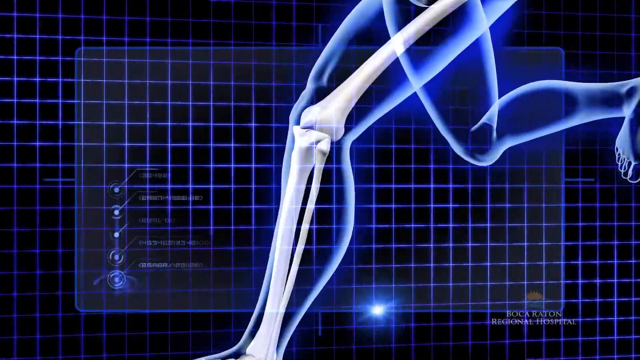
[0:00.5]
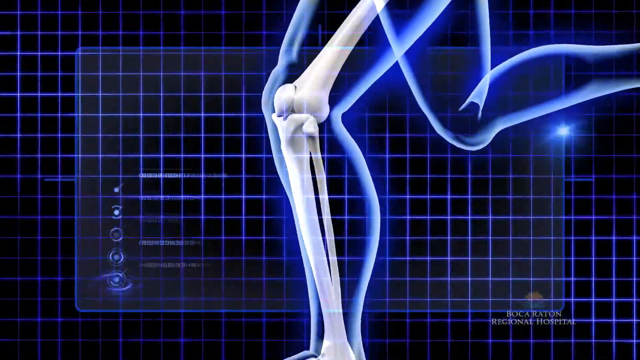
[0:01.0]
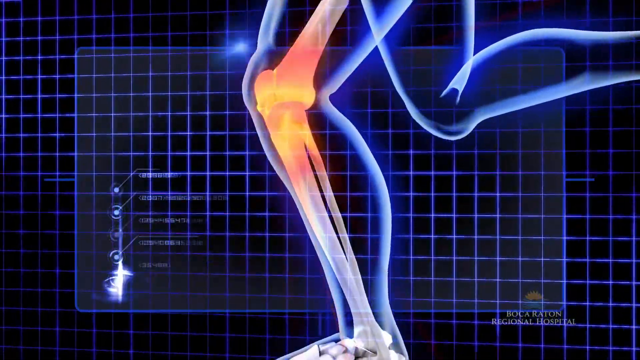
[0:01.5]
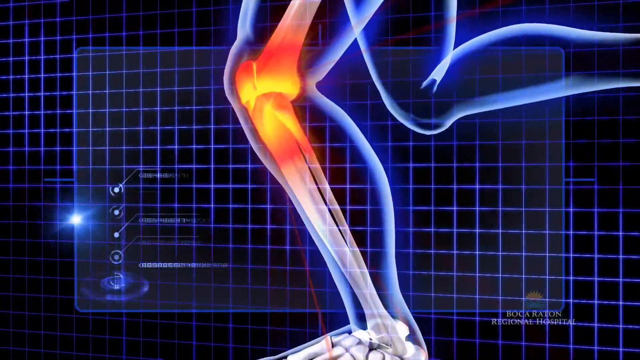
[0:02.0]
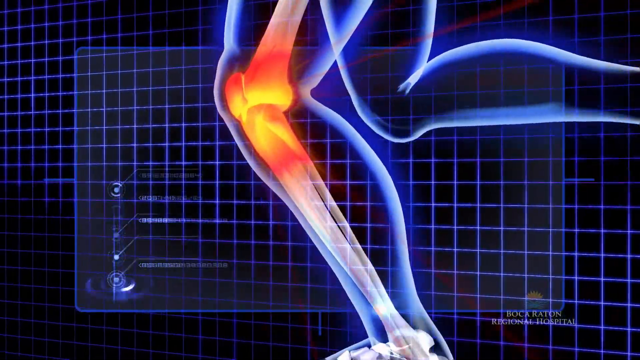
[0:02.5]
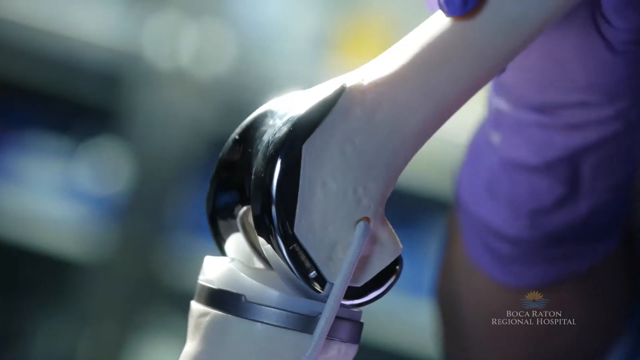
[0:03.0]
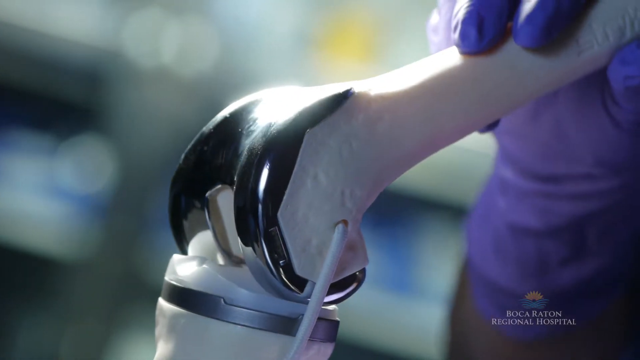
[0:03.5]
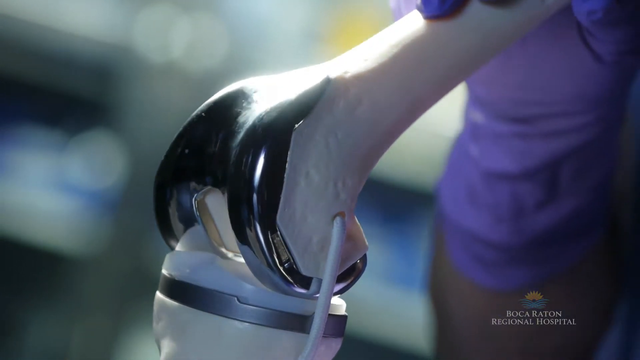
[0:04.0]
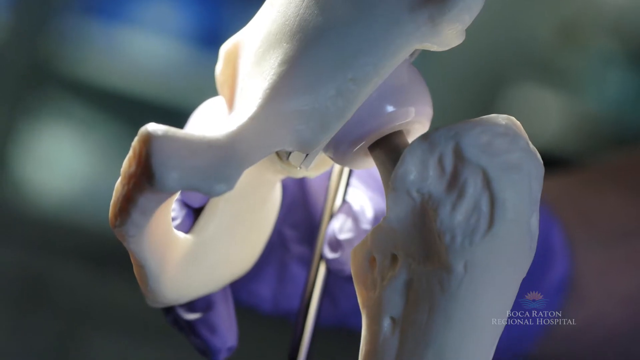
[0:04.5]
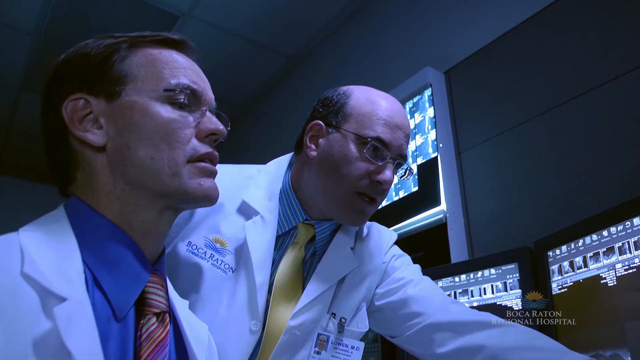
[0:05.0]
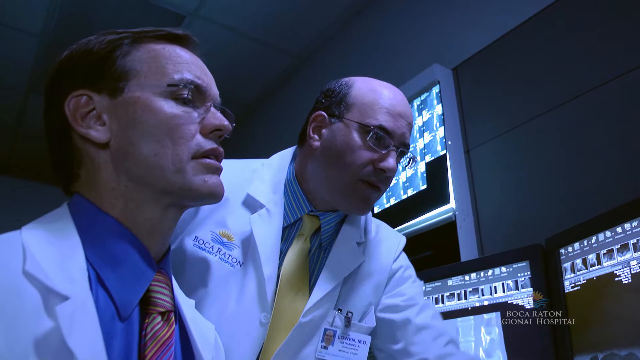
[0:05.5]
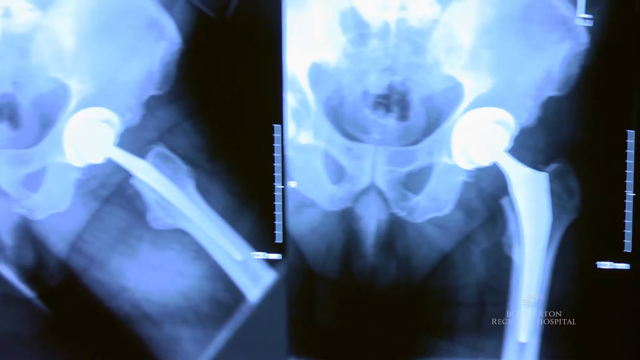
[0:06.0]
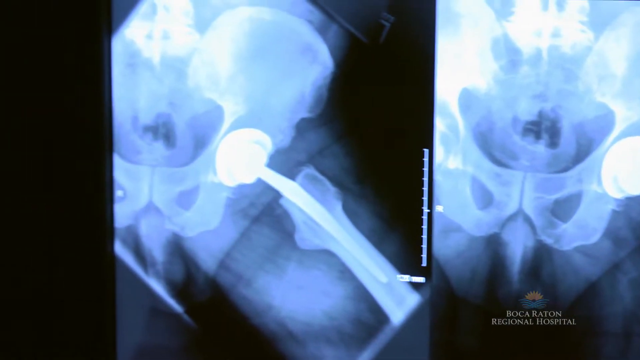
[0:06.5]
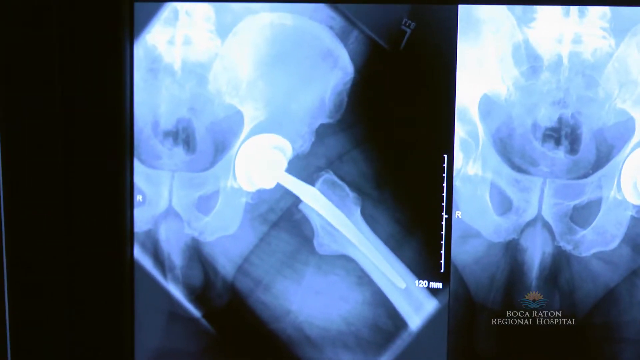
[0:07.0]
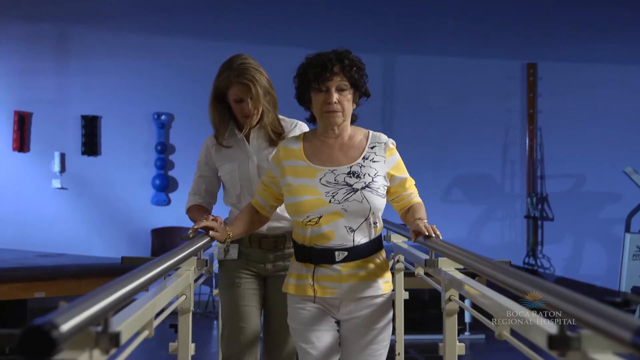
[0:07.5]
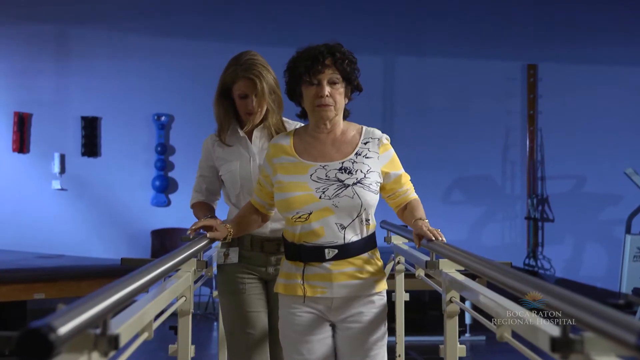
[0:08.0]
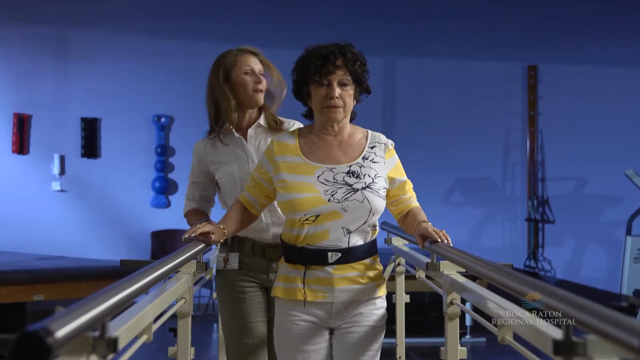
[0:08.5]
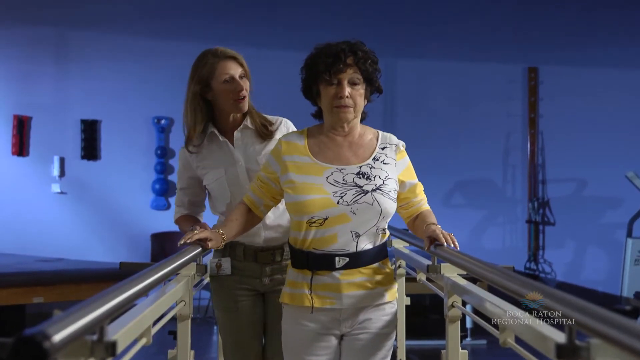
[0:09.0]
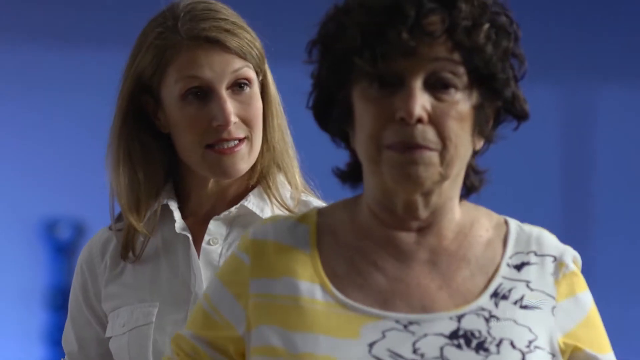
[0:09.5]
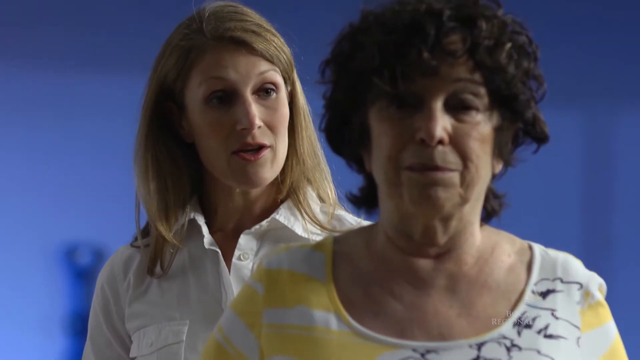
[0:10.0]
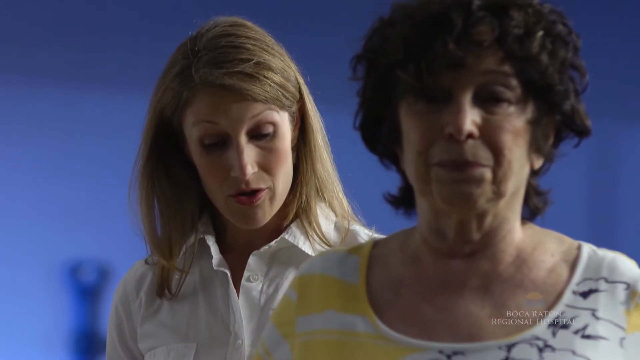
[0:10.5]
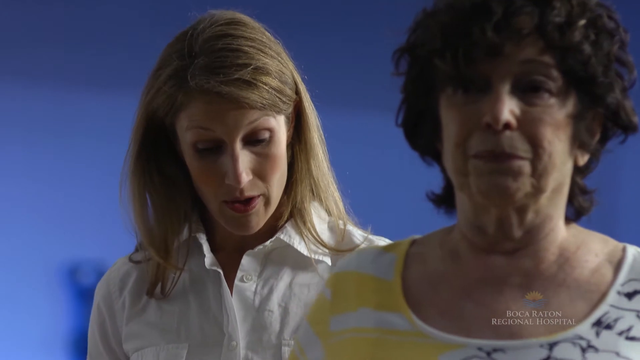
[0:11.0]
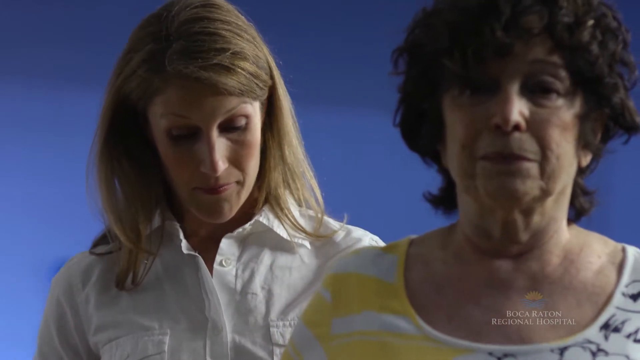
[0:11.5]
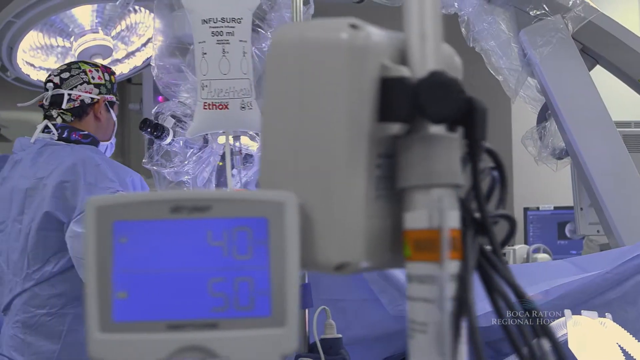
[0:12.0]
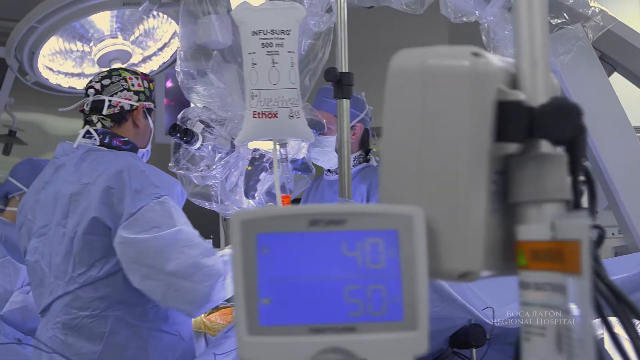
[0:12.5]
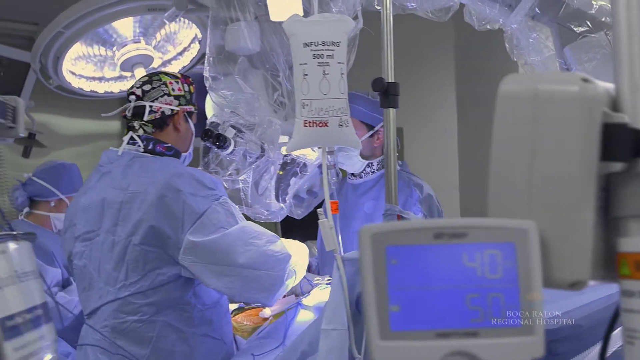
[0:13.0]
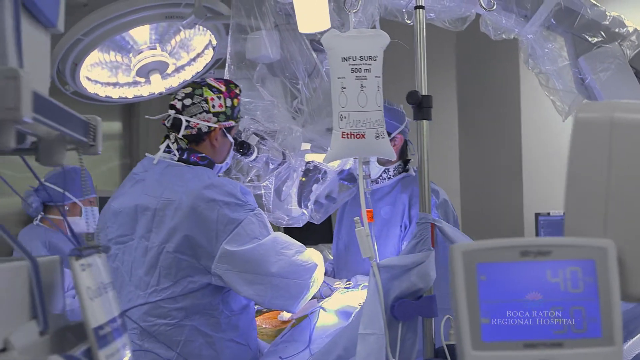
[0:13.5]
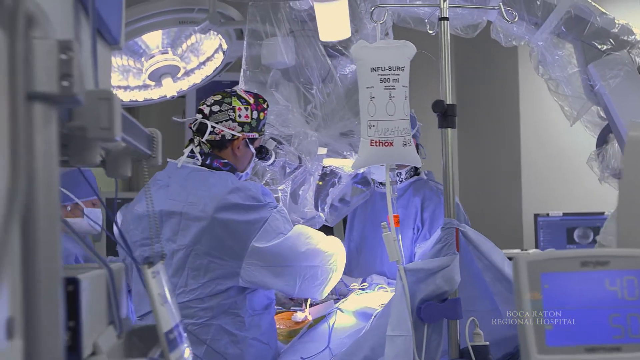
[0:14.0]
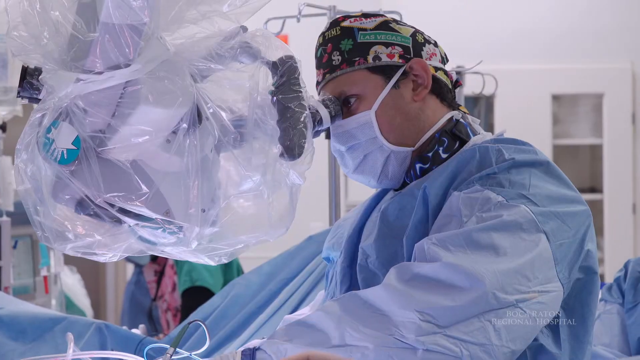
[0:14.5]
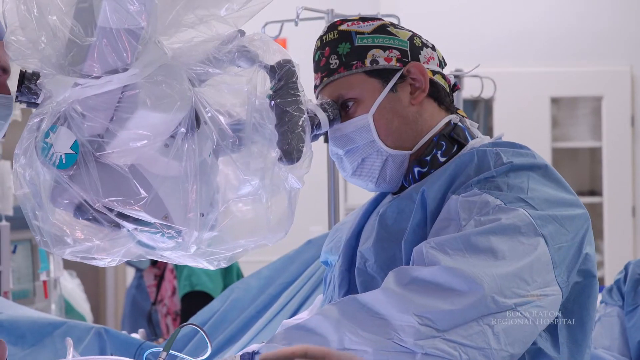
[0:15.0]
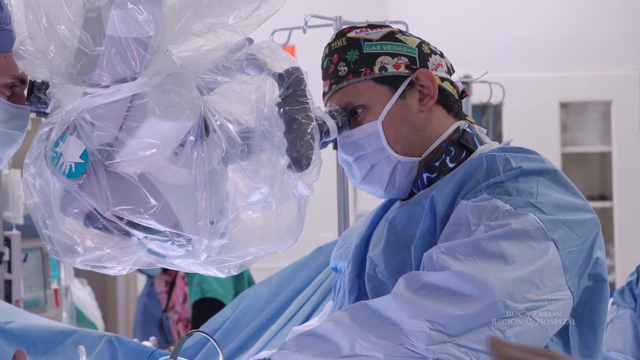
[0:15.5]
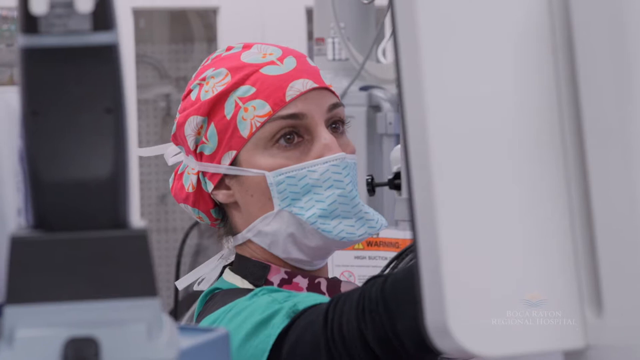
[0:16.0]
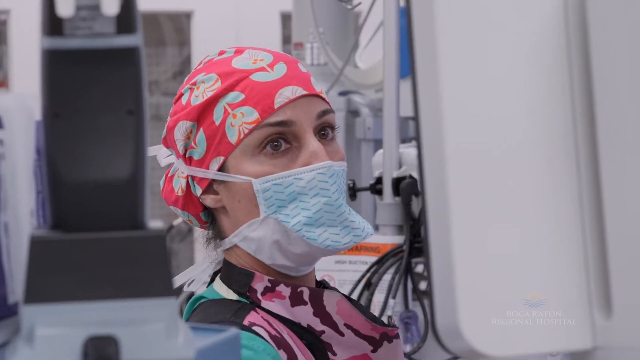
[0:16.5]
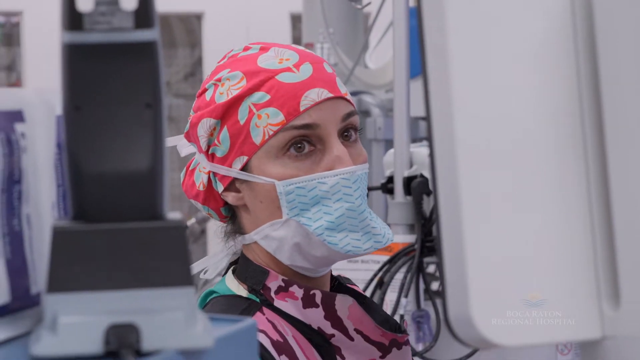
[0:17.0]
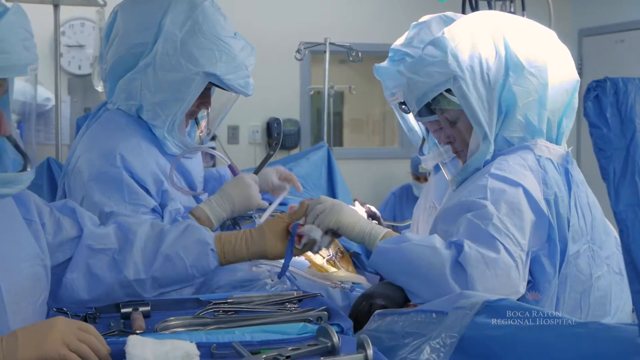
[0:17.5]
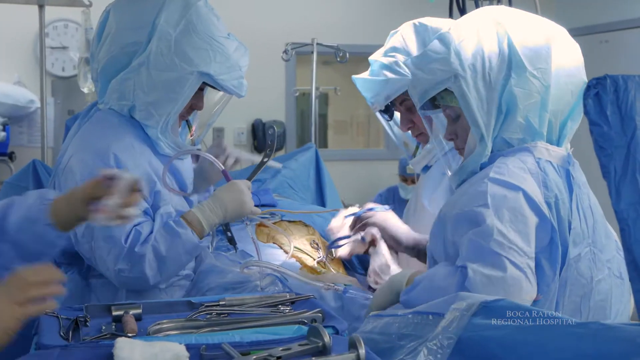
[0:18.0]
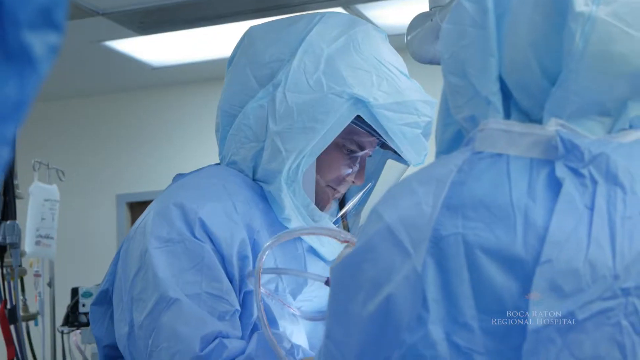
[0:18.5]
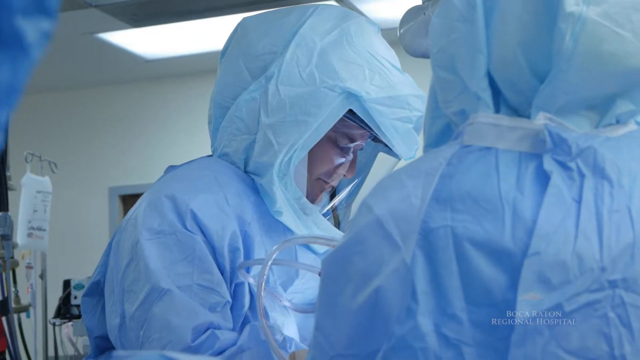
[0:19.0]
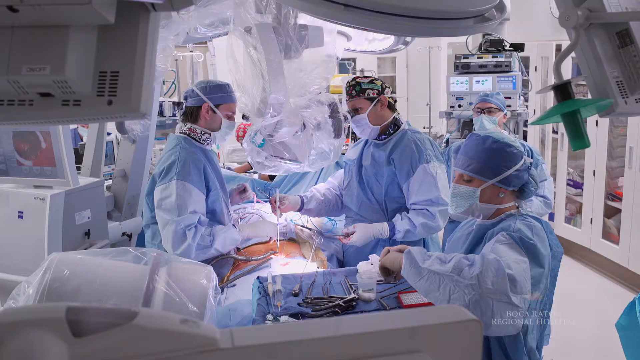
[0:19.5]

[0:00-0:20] Against a black background is a somewhat futuristic-looking graphic with a grid illuminated in bright purples. An outline in a lighter, more illuminated purple of someone running crosses the screen; only the legs are seen. As the left leg hits down, an illustration of the bones inside that leg becomes visible, and as the leg impacts and bends, the knee joint lights up in bright oranges and yellows, perhaps showing the impact. Text and some logos in the lower left suggest a futuristic technology setting. A white ball of light travels around the edge of a see-through rectangle in front of the grid, starting on the right side, going up across the top and then back down. The view switches to what looks like an artificial knee, white with some darker silver metal apparently around the knee area, and a purple latex-gloved hand moves it up and down to show how it moves. Next is what looks like a model of a knee of the kind seen in a doctor's office, white and showing the different parts of the knee, with the front patella part rotating a little. The images come in quick succession. Two men in white lab coats appear, wearing colorful button-down shirts and glasses. The man on the left has a blue shirt and a red tie; the man on the right has a yellow tie and is balding. Both are Caucasian; the one on the left is probably about 40 and the one on the right looks about 50. The camera then pans from right to left across two x-rays, which possibly show the same knee area. A woman walks on a device used by people learning to walk again, which looks somewhat like a treadmill, in what looks like a physical therapy office. A woman behind her helps her; she is probably about 40, with medium-length blonde hair and a white button-down shirt. The woman in front is a bit older, with short curly black hair, a scoop-neck top with a yellow, white and blue pattern, and a black belt; she holds the railings of the treadmill and tries to take some steps. A close-up shows their faces. The scene changes to an operating room where people are operating, with different angles of a person looking through an eyepiece that helps him see during surgery. They wear brightly patterned hats and scrubs. Another operating room follows, where the people wear light blue hazmat suits.